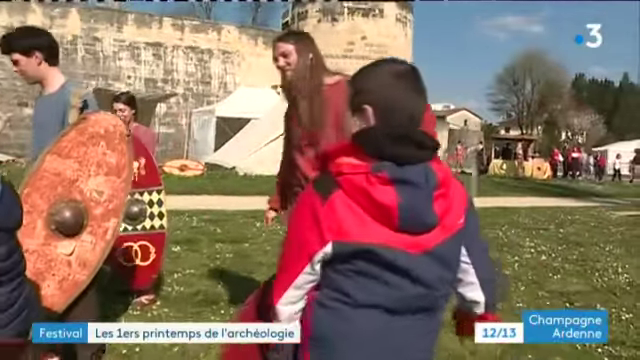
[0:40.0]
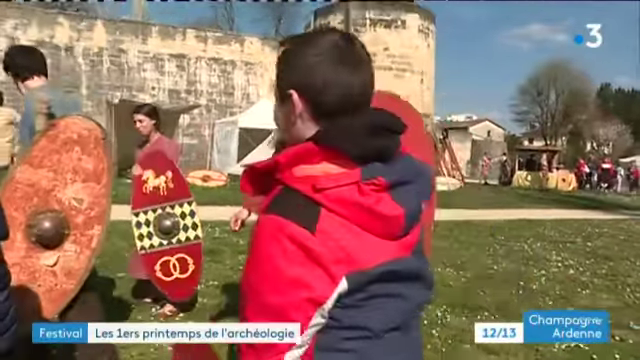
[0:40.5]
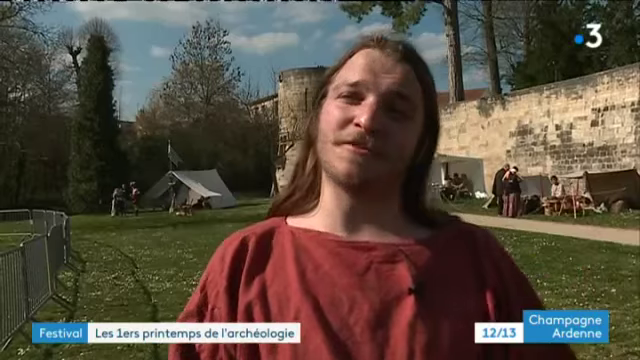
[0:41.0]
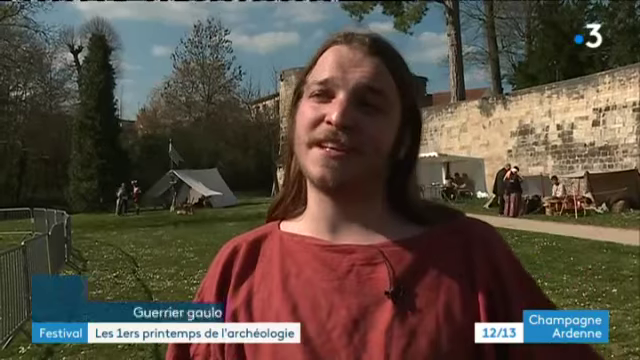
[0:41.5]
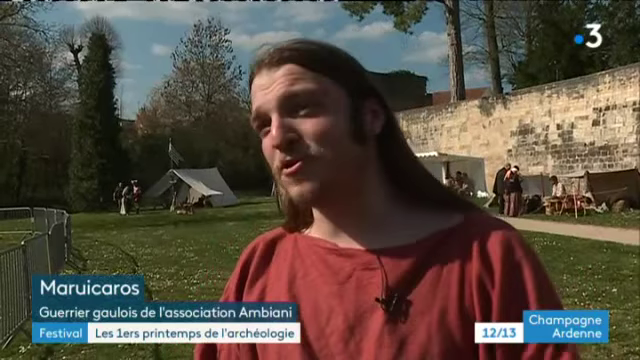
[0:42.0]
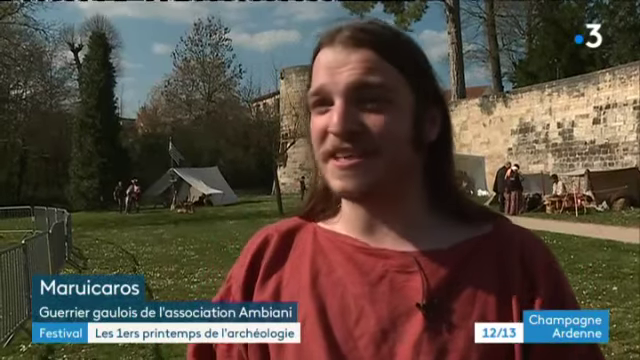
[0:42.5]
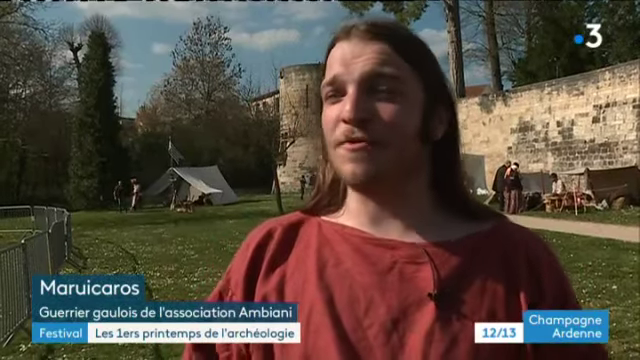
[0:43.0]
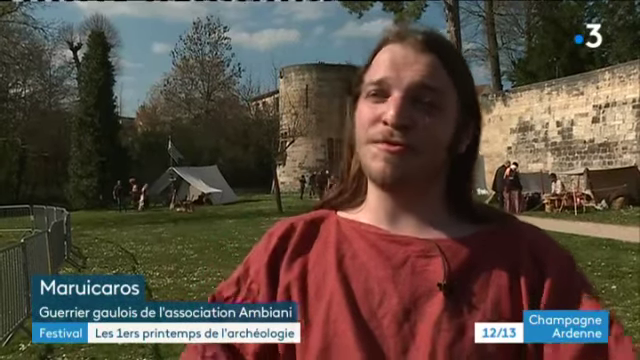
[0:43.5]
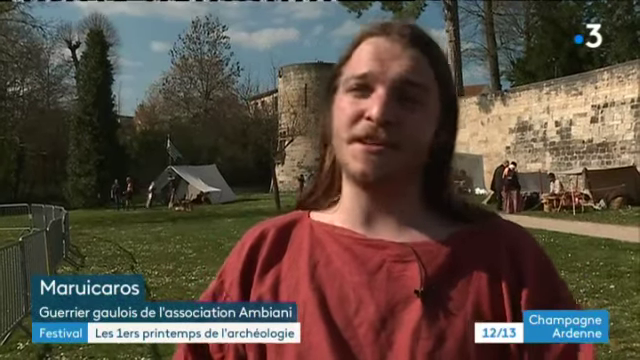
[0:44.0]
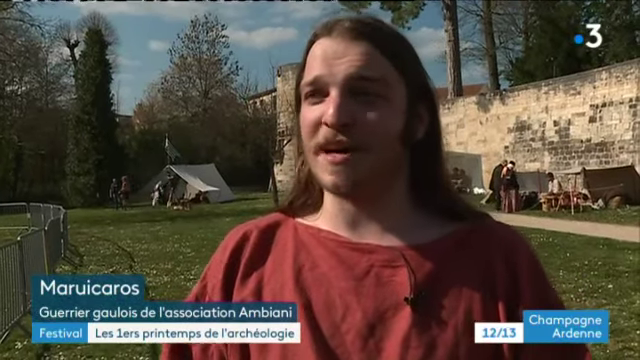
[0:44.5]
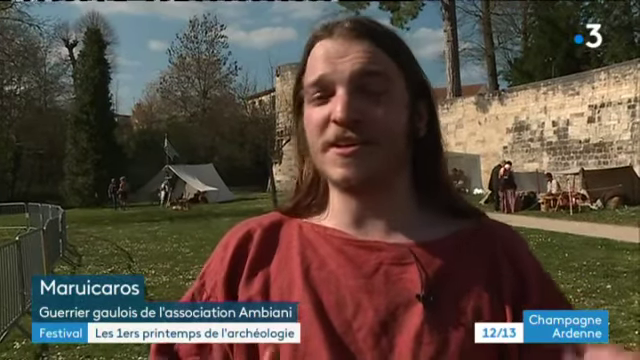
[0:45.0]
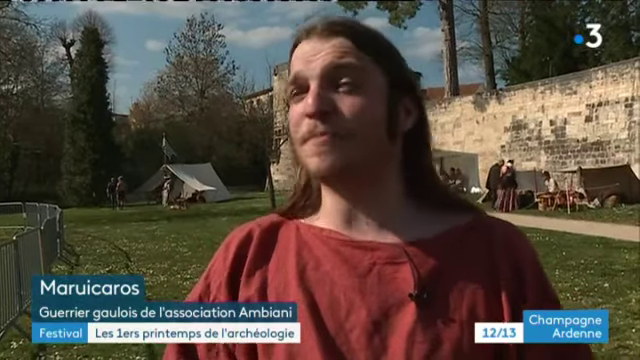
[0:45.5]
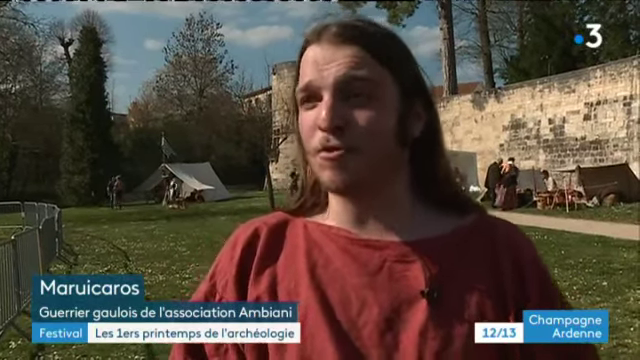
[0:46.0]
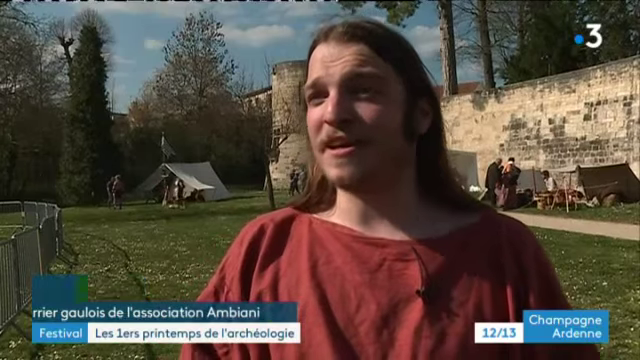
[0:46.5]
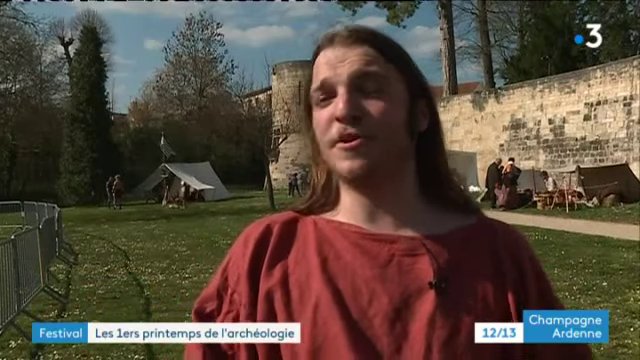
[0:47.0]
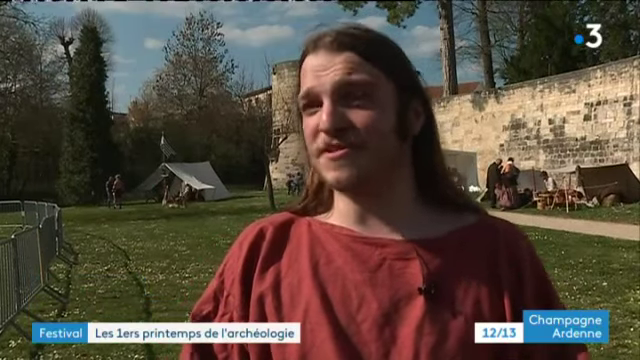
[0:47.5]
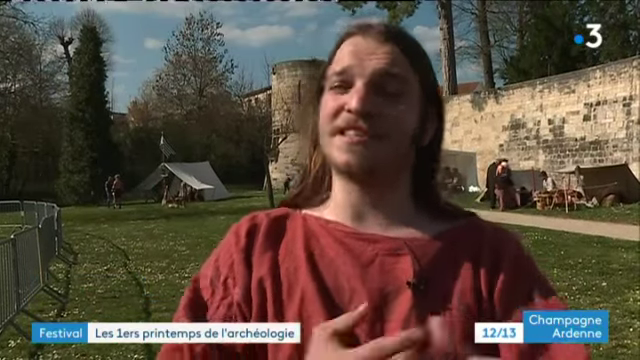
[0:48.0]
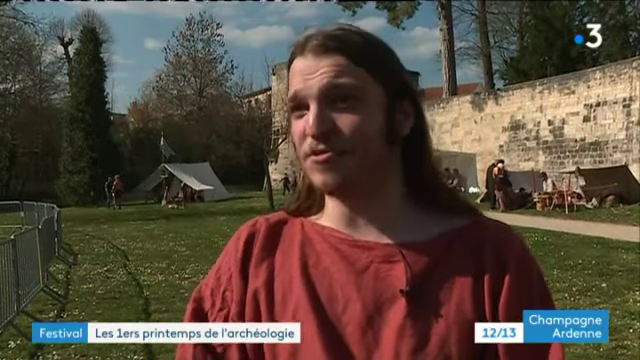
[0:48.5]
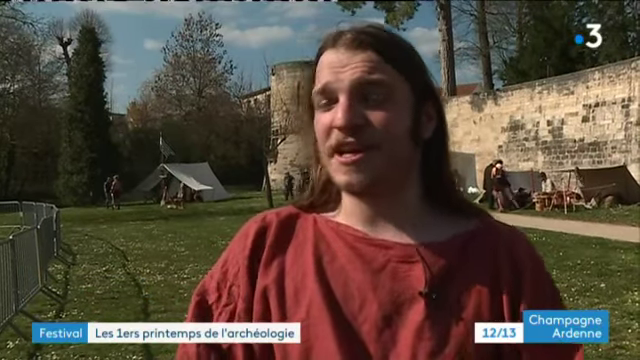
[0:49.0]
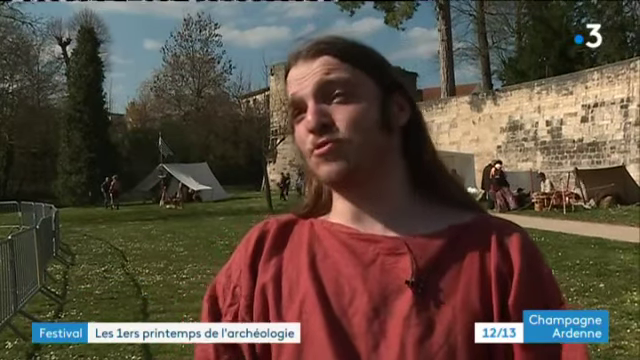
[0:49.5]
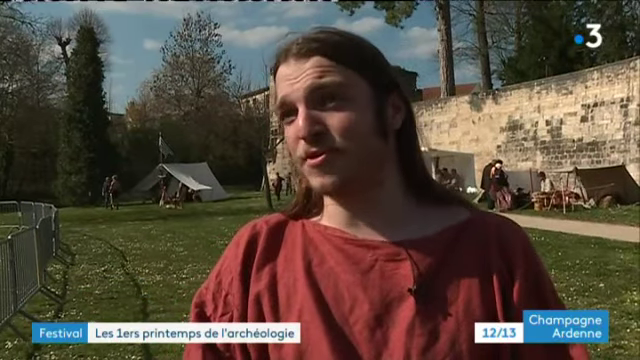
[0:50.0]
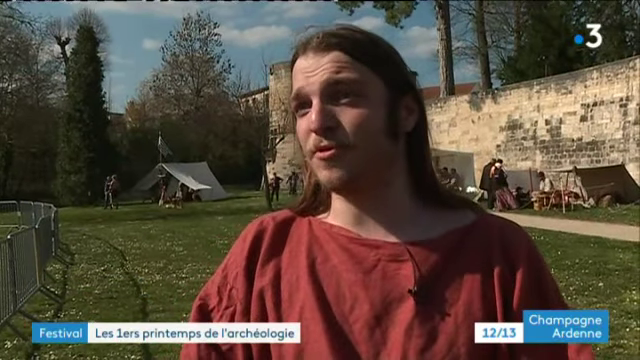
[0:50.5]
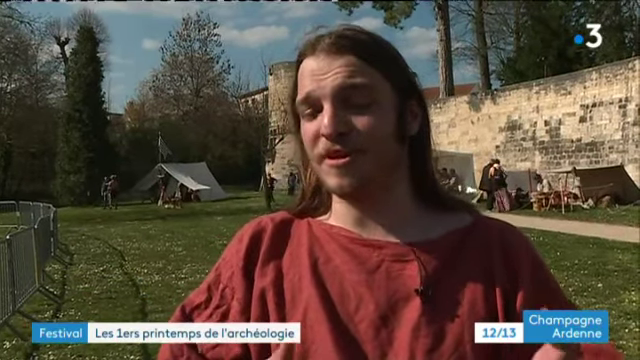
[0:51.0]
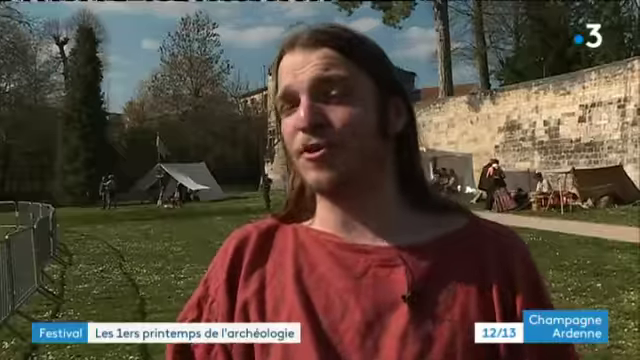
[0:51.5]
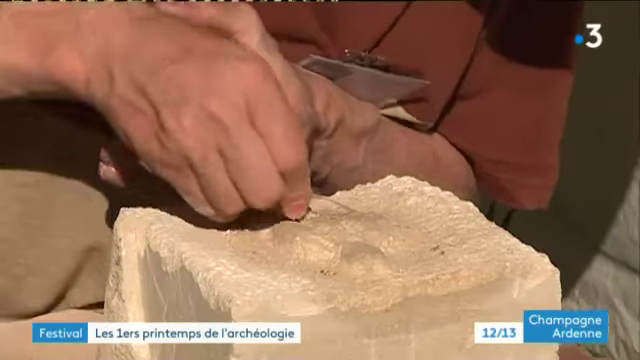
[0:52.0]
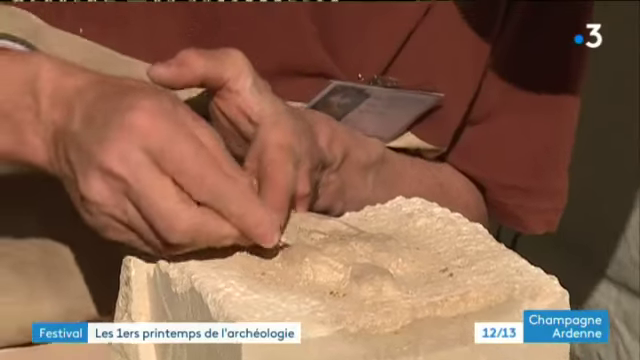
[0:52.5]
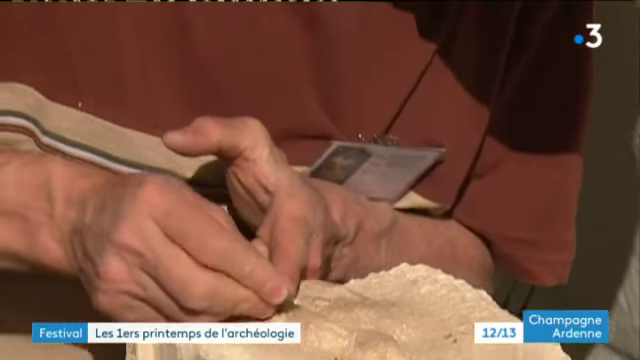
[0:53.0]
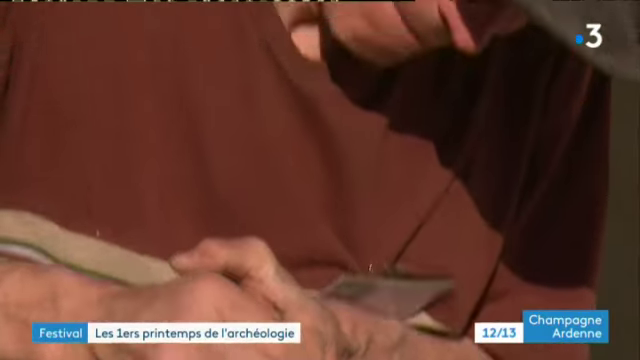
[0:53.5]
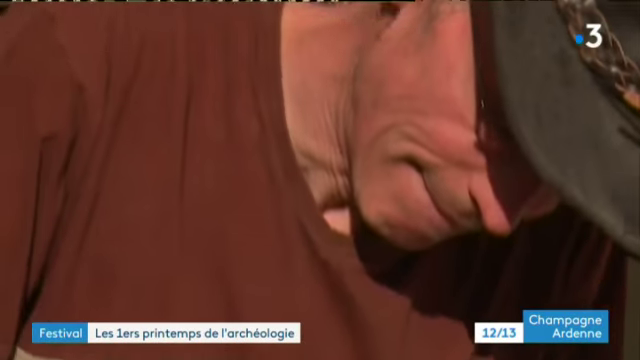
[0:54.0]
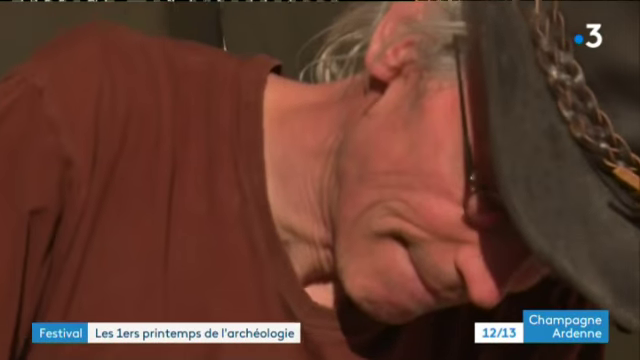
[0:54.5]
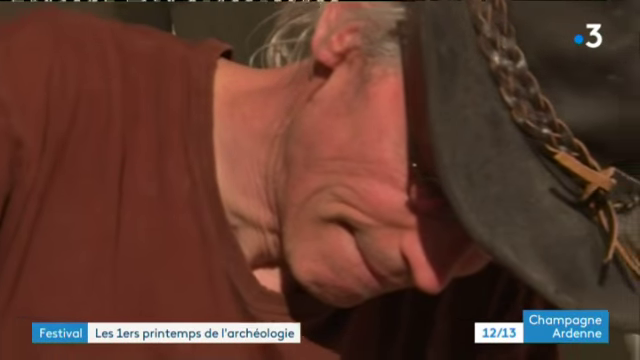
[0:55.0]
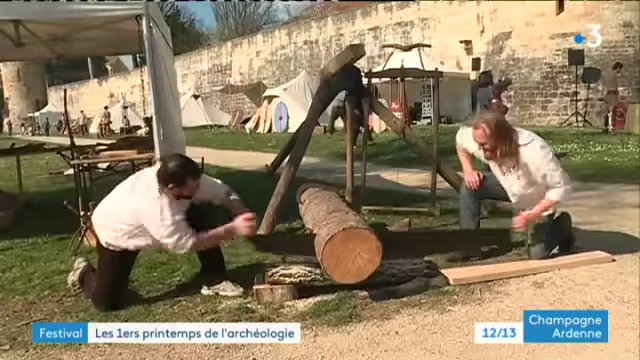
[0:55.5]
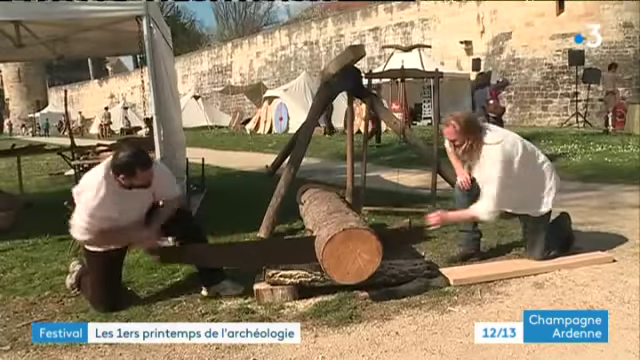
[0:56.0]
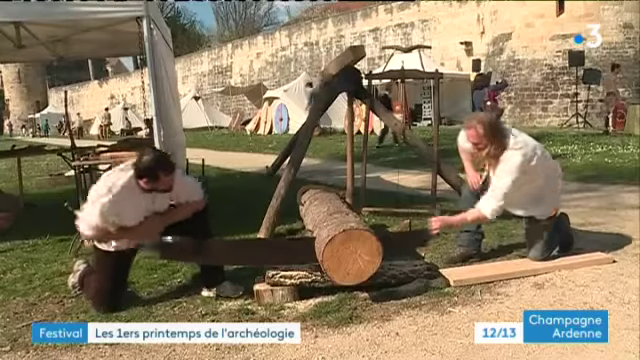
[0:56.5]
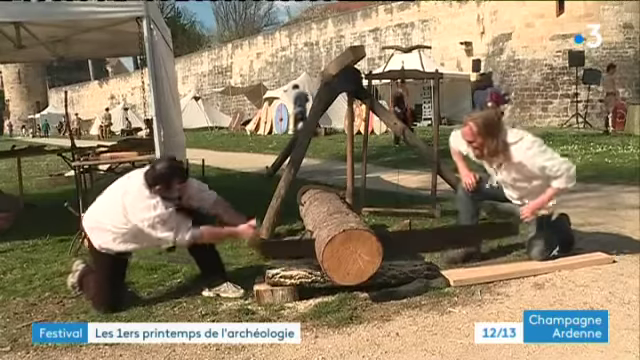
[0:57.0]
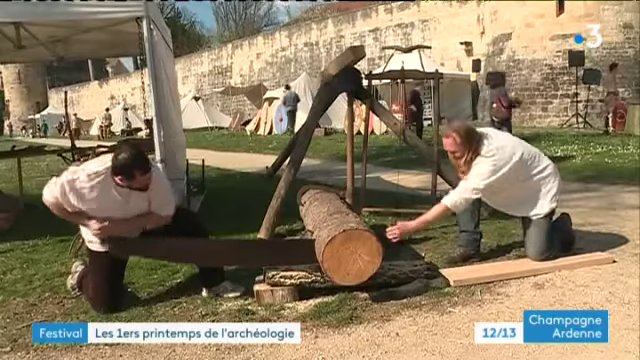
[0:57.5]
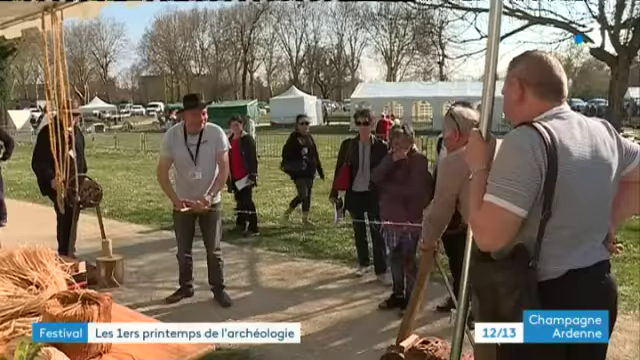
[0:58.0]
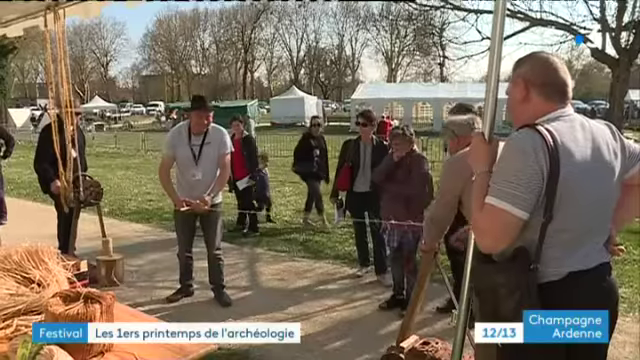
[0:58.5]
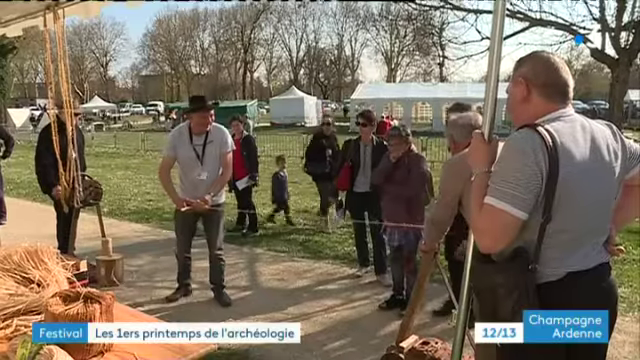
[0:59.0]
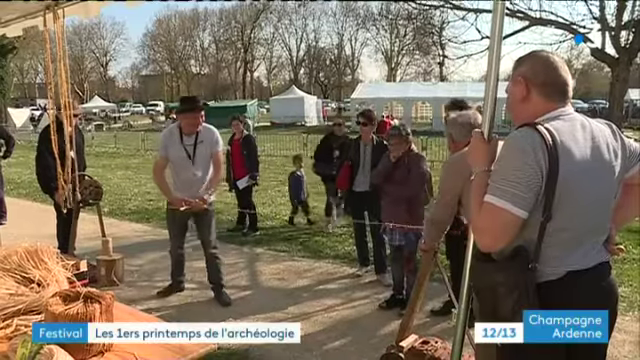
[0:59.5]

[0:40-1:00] One of the men who pretended to fight the children speaks directly to a reporter behind the camera. He has long brown hair and a beard and wears a rust red tunic. Behind him are green grass, a tent, several tourists milling around, and the old stone wall of a medieval castle. He smiles as he talks, and a blue box pops up in the lower left corner with his name, Marui Karos, in white text, with French text underneath. On the right of the screen, white text inside a blue rectangular box says "Champagne Ardennes". After he talks for a while and gestures with his hands, the shot changes to a man in a brown t-shirt carving a piece of rock or brick. The camera pans up to show his head bent down, focused on the work; he wears glasses and a black hat. Next, two men in white tunics and dark-coloured trousers kneel on the grass and saw a log with a two-man saw, pulling it back and forth between them. Behind them are the castle wall and several tents extending along it with different displays inside, and several people mill around in the background. Then a shot from inside one of these tents shows two men holding a piece of string between them.